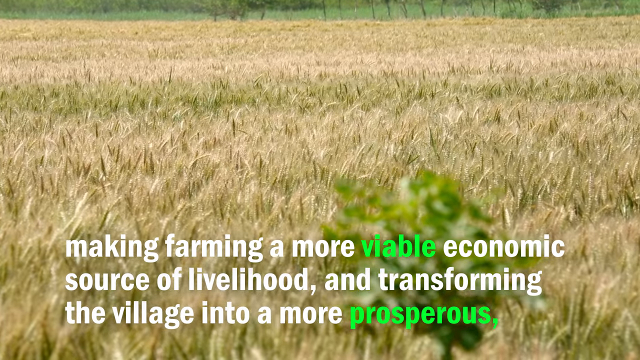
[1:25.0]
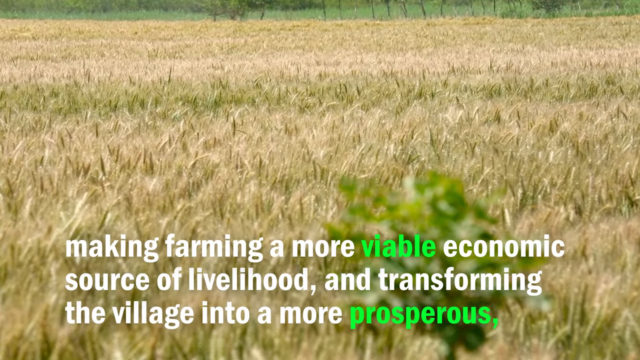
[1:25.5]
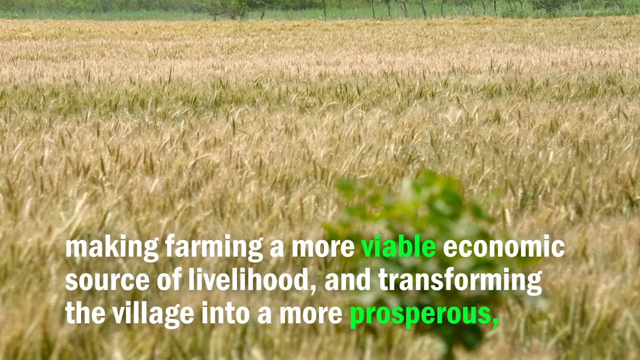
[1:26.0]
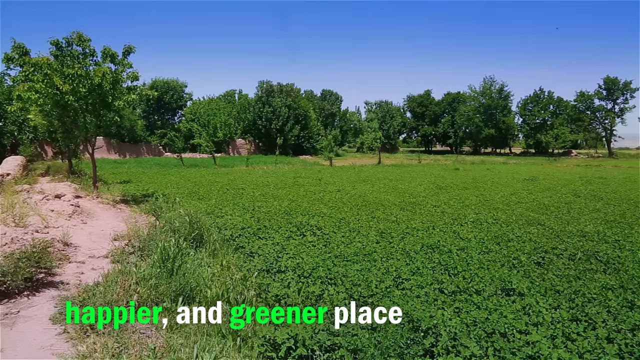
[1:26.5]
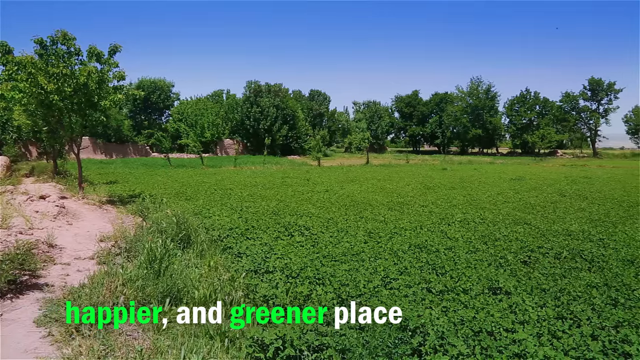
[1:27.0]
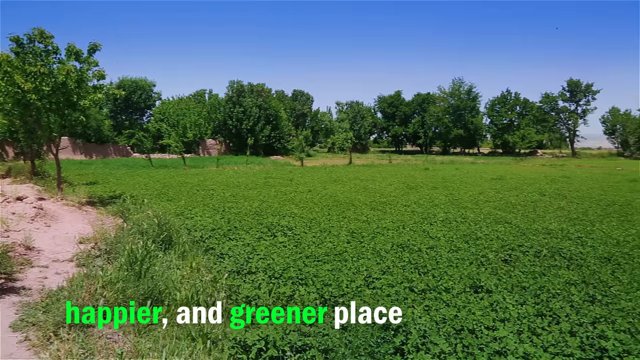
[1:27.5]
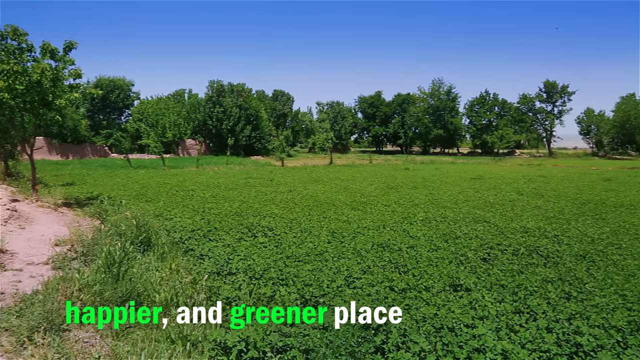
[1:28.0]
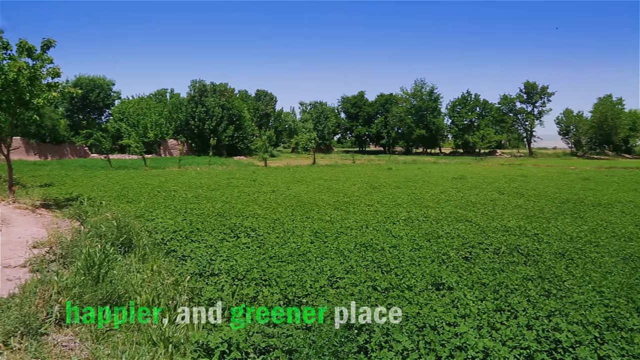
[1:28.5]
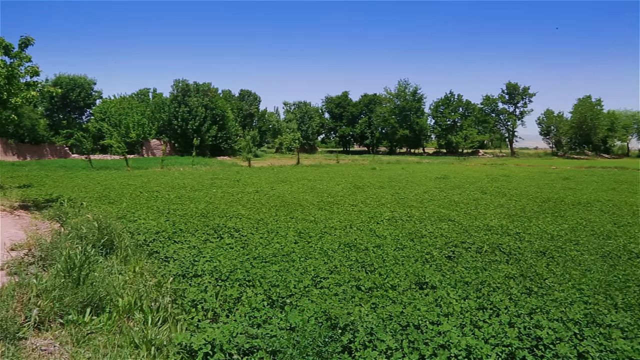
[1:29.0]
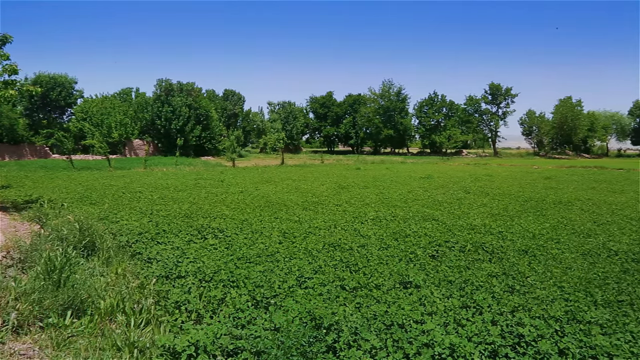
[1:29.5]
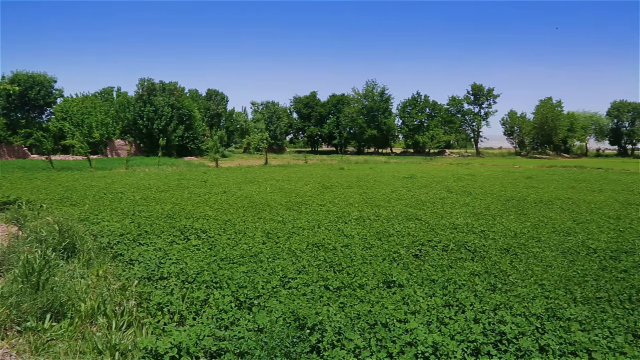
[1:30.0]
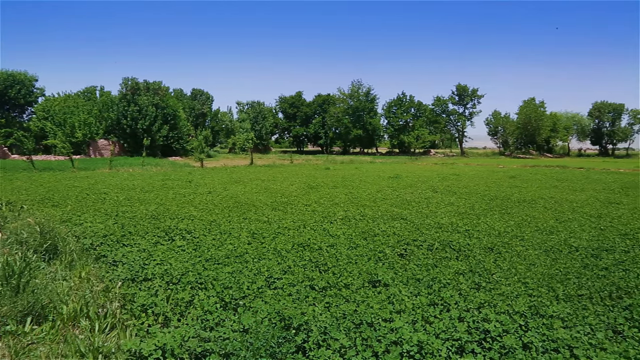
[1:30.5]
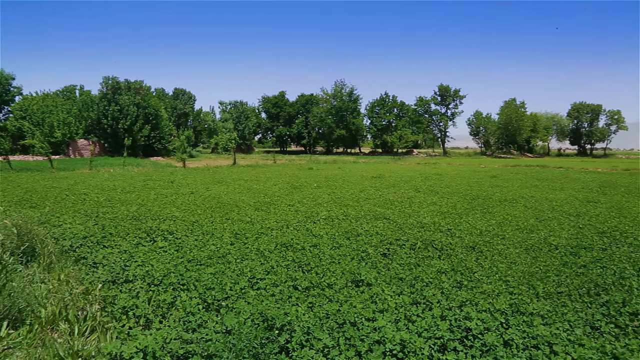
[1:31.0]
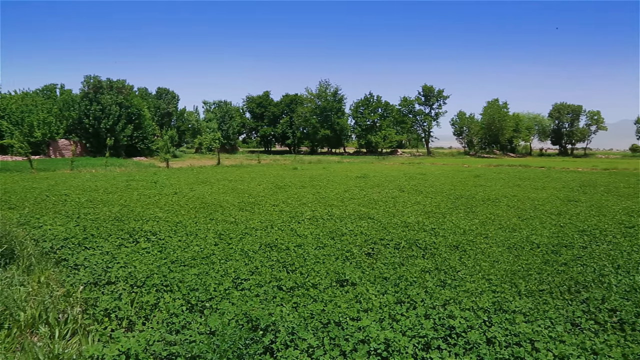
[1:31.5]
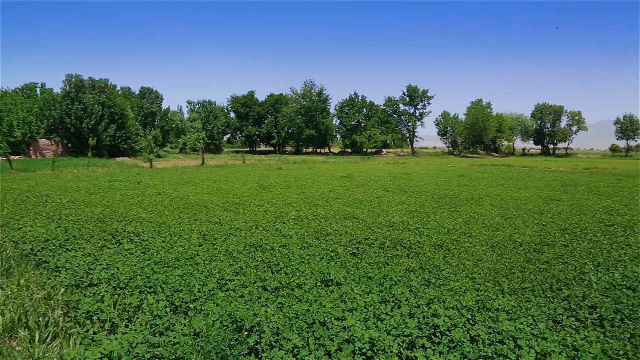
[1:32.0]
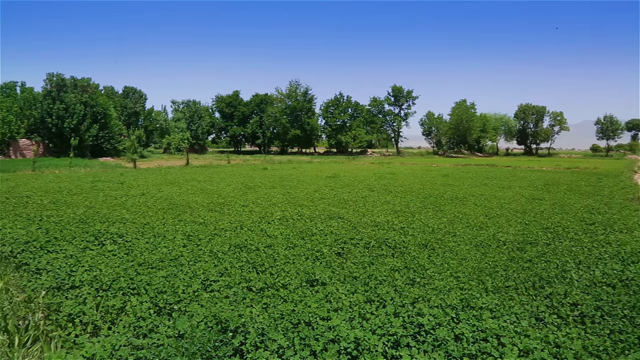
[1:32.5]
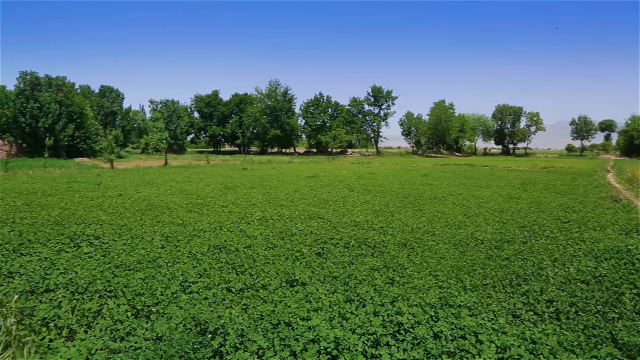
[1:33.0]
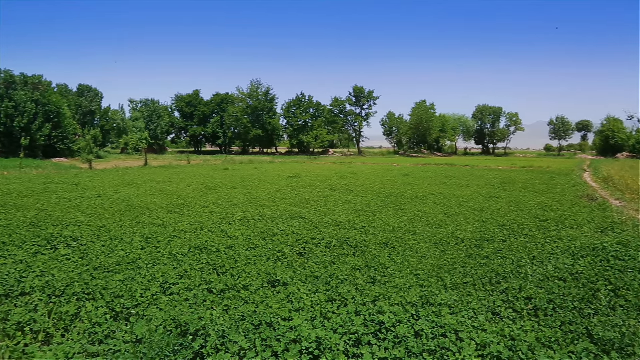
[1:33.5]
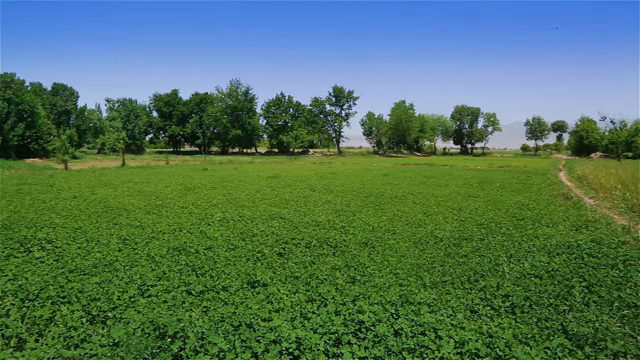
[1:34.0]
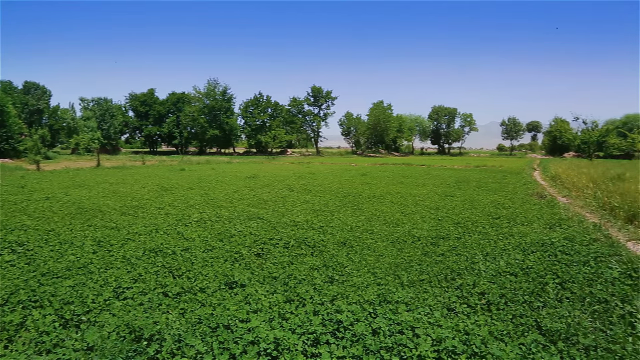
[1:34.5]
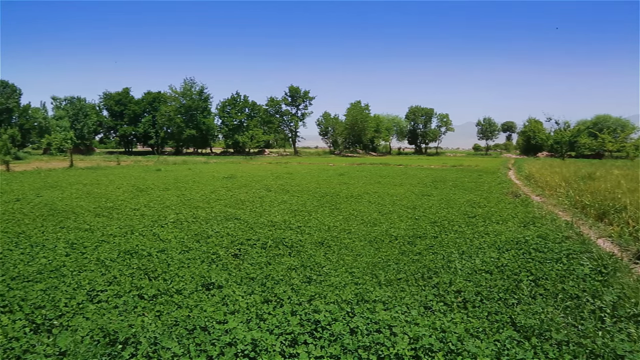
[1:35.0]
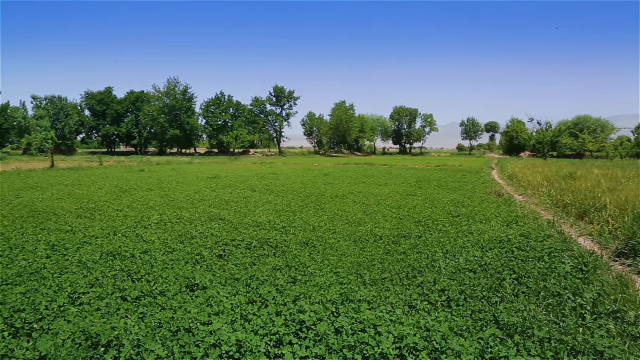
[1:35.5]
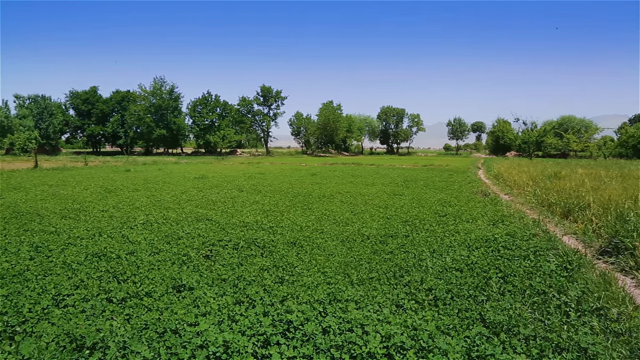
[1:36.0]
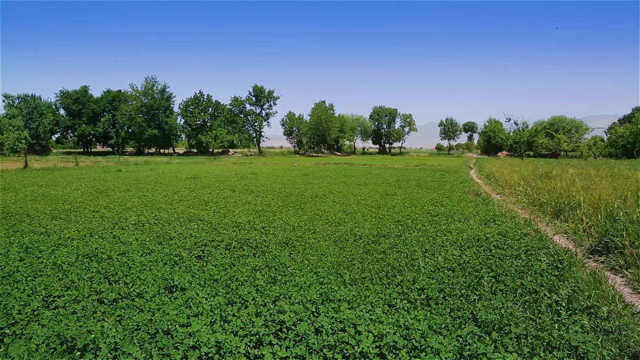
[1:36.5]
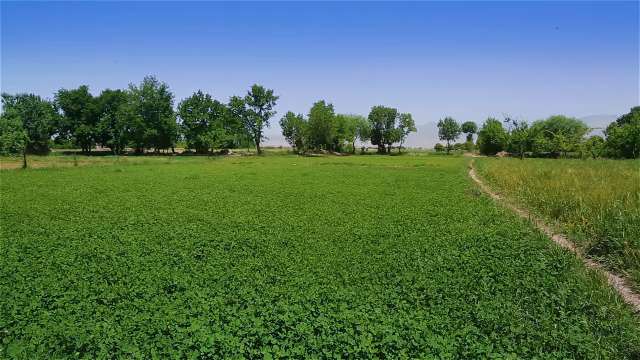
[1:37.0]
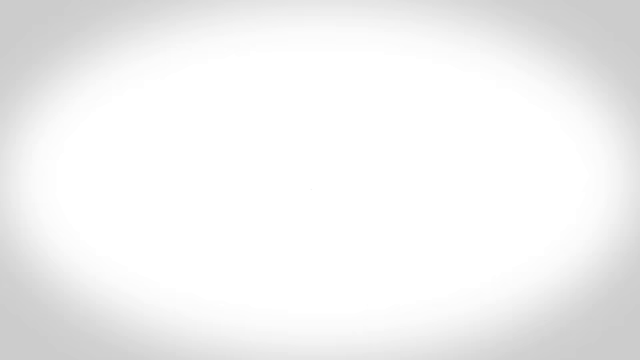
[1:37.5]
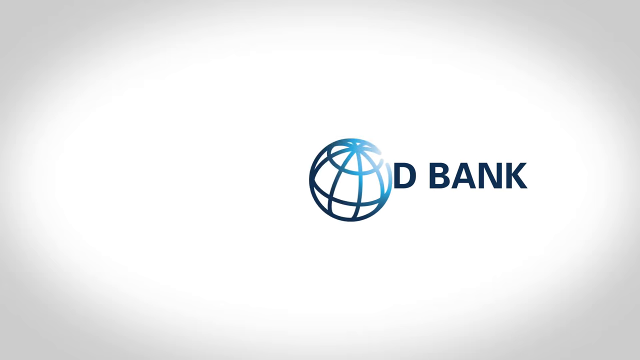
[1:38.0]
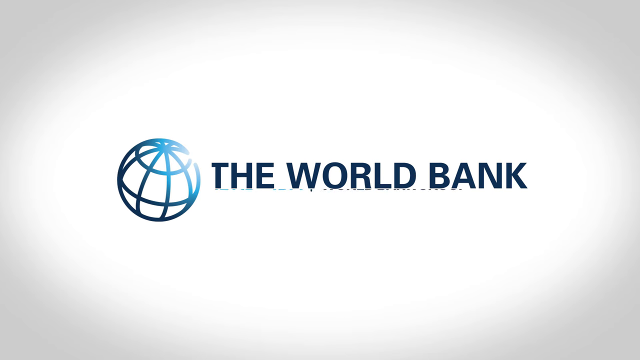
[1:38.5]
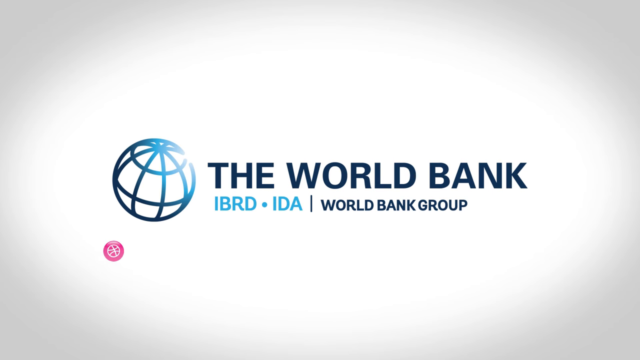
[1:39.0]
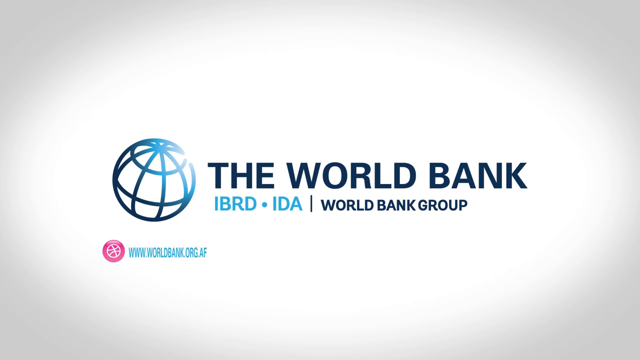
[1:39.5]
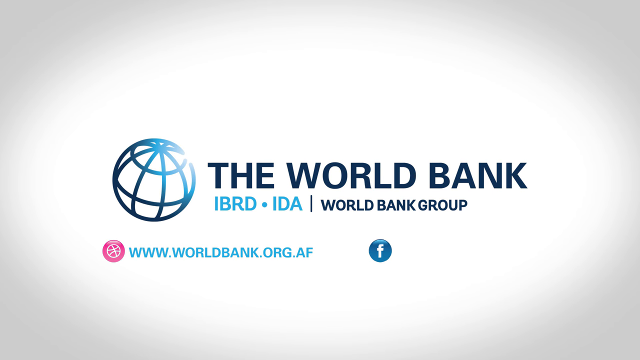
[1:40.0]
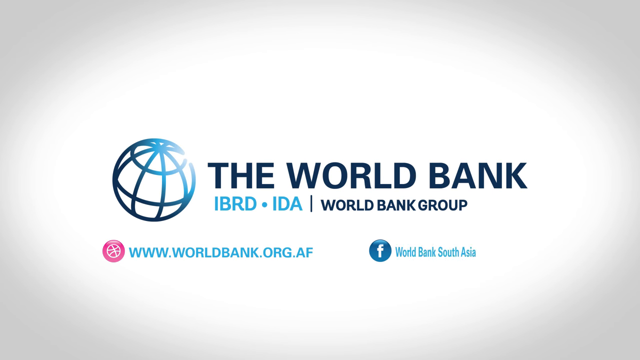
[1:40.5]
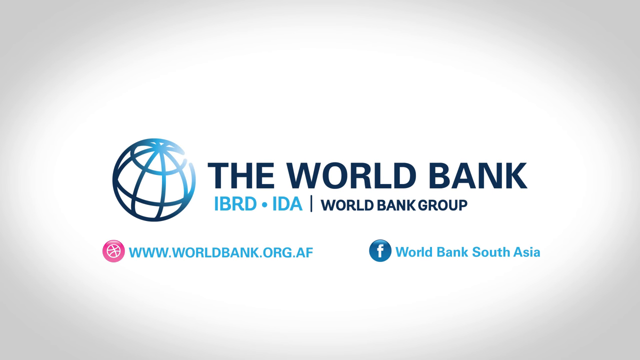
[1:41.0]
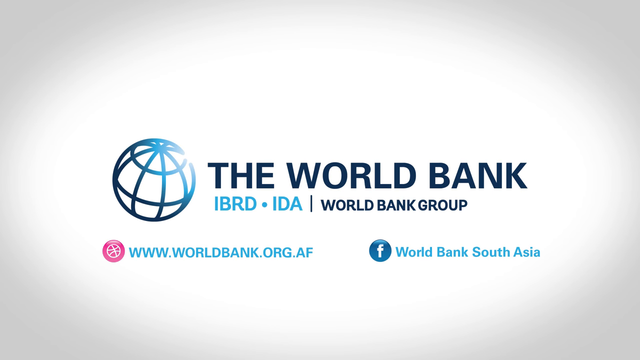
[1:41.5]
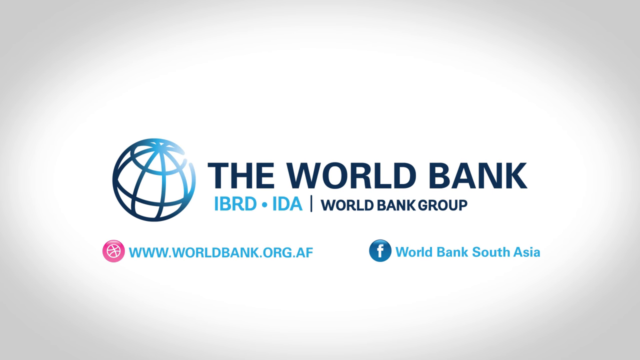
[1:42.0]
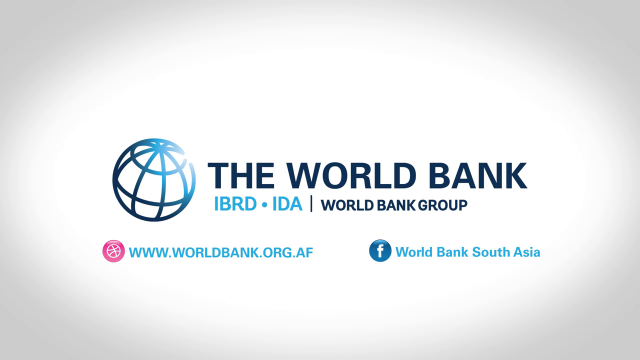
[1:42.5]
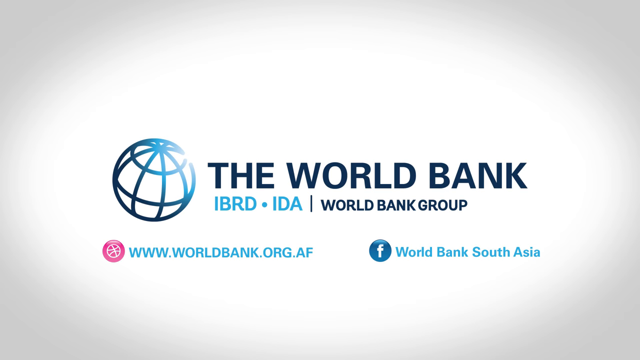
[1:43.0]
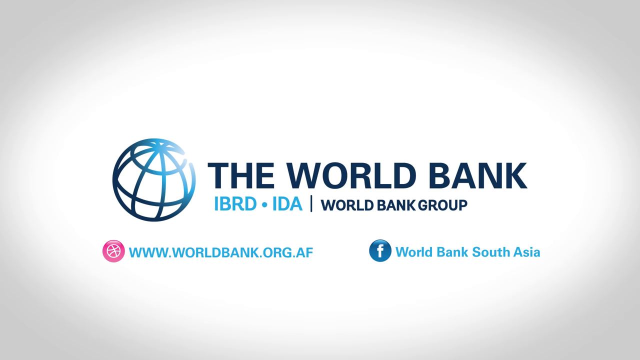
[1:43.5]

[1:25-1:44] A wide-angle shot shows golden-green crops that look like wheat, perhaps, or some type of grain, with a text overlay at the bottom reading "making farming a more viable economic source of livelihood and transforming the village into a more prosperous" followed by "happier and greener place." The camera switches to very lush, very green crops, a very large plot of green plants, with trees in the background. The camera pans to the right across the large lush green plot, which contrasts with what looks like a little bit of arid background visible. The scene then switches to a logo that looks like a sectioned-off outline of a globe, with text reading "the World Bank" and "I-B-R-D, I-D-A, World Bank Group." This appears to be the closing image of the video.